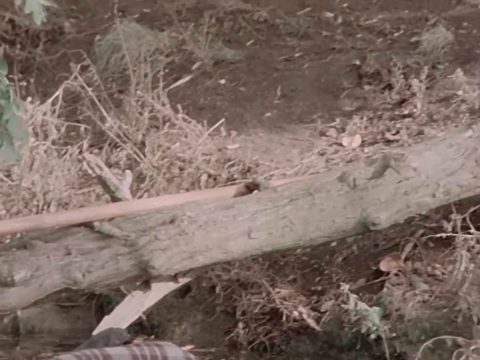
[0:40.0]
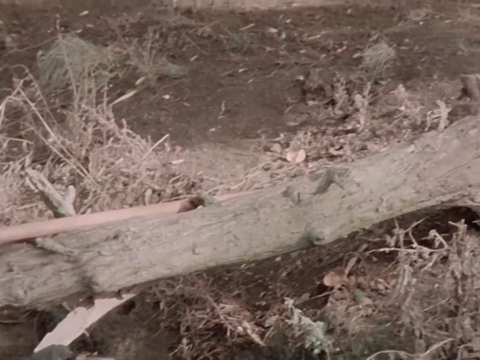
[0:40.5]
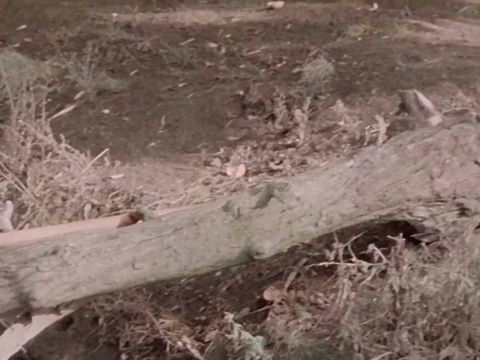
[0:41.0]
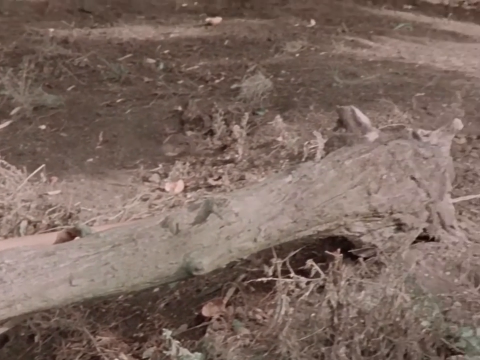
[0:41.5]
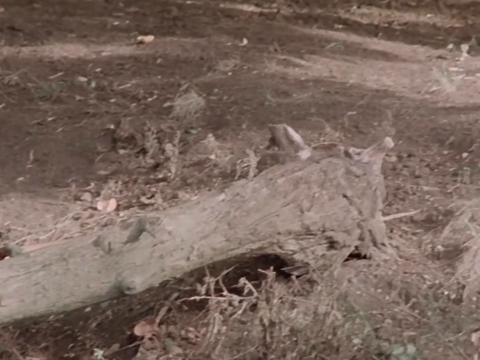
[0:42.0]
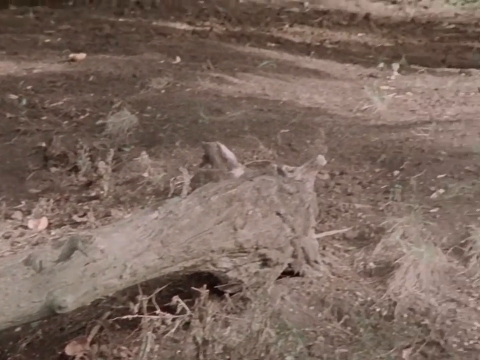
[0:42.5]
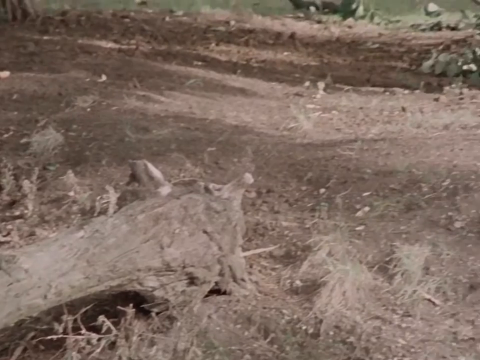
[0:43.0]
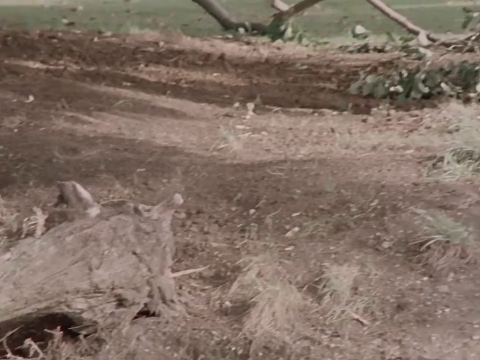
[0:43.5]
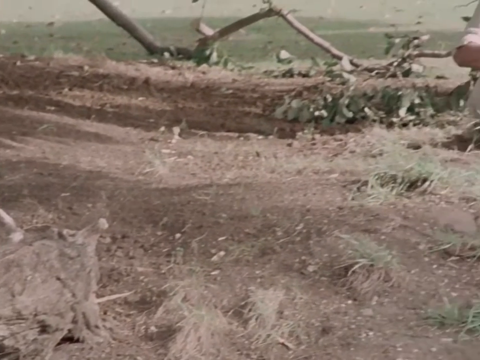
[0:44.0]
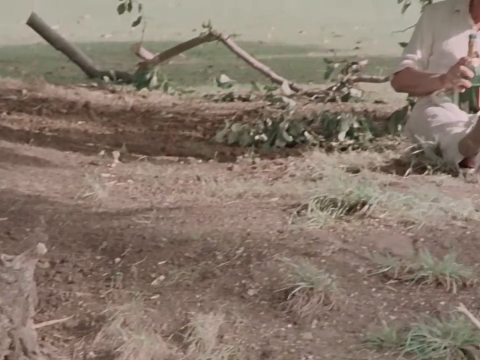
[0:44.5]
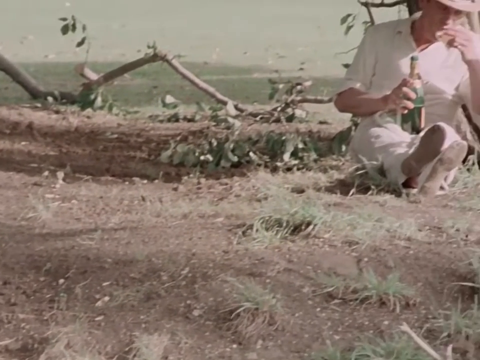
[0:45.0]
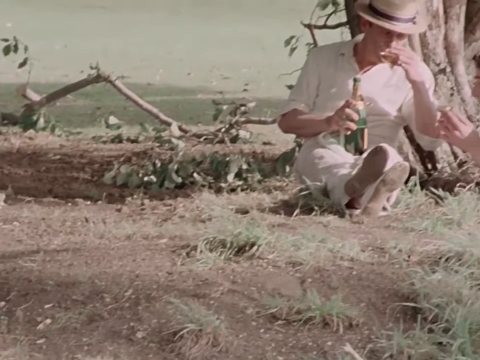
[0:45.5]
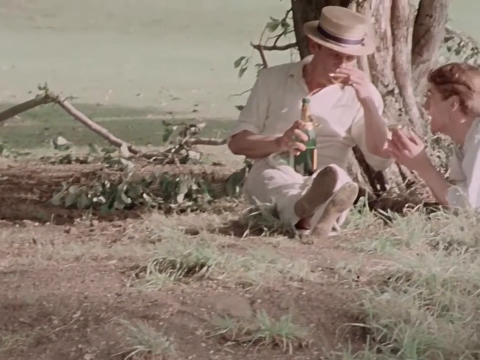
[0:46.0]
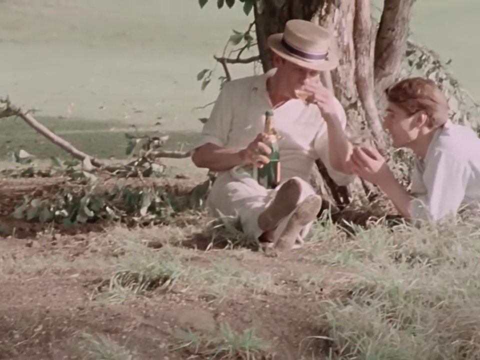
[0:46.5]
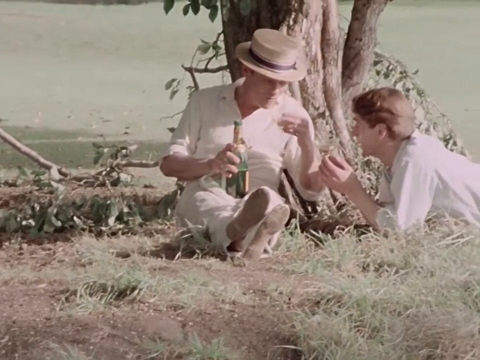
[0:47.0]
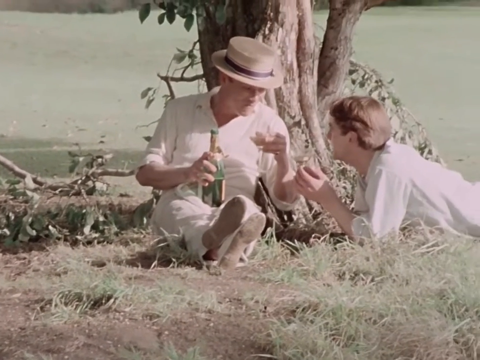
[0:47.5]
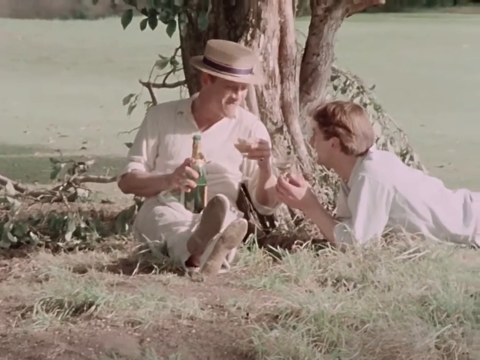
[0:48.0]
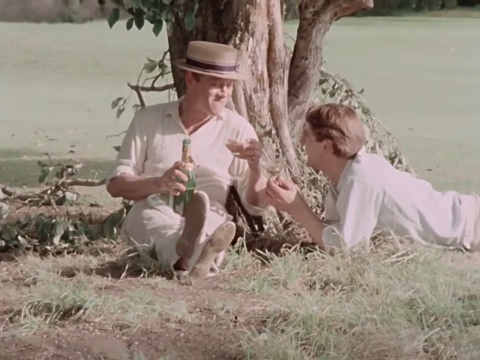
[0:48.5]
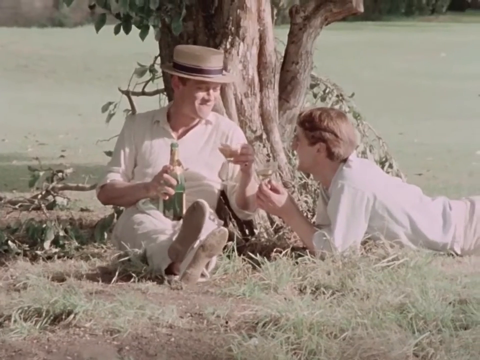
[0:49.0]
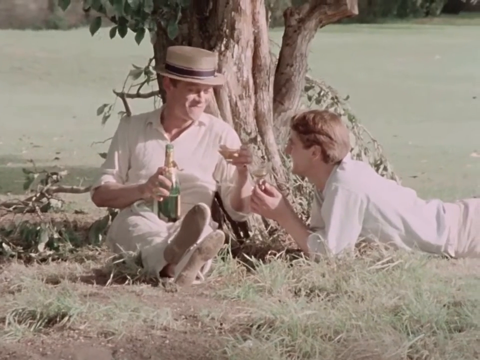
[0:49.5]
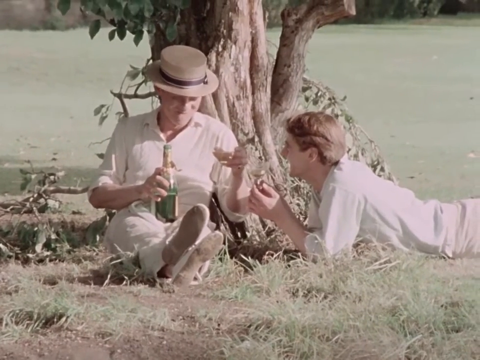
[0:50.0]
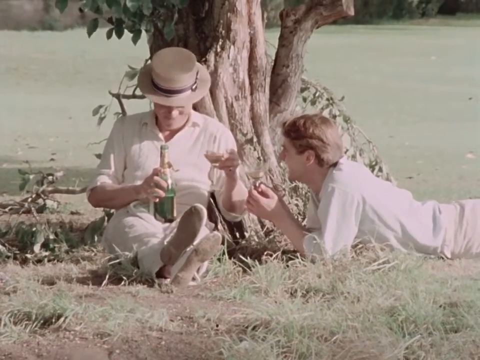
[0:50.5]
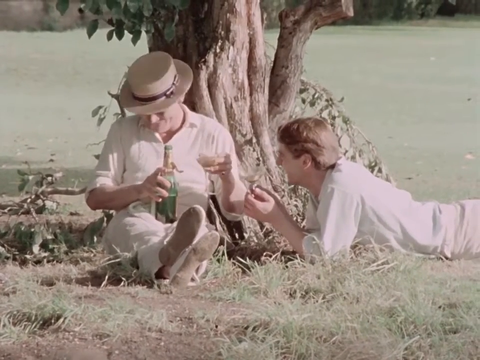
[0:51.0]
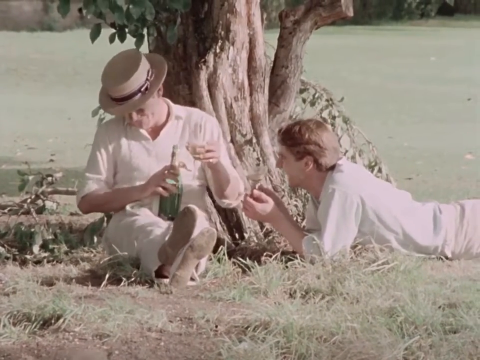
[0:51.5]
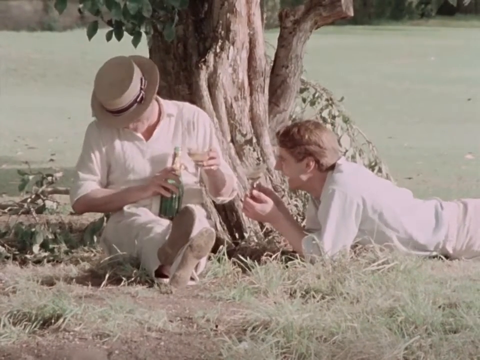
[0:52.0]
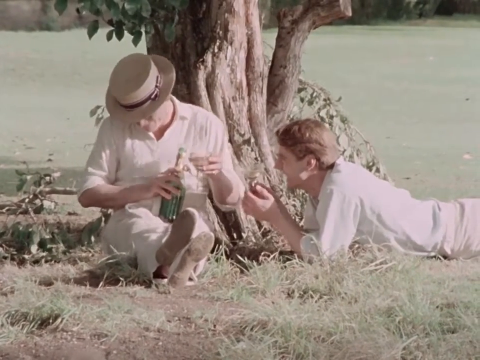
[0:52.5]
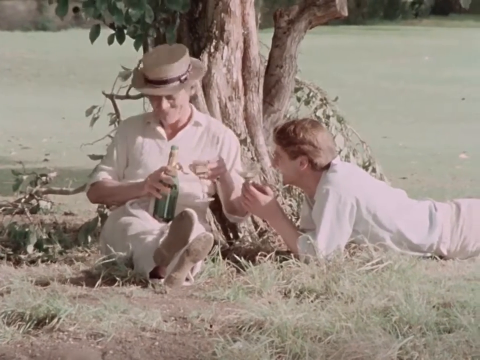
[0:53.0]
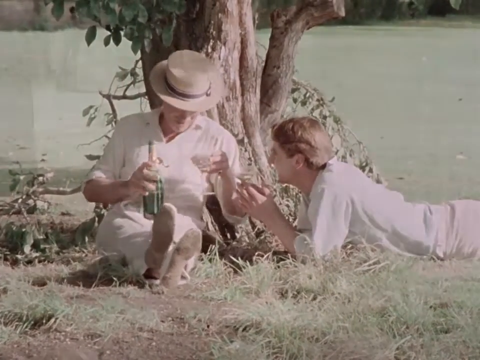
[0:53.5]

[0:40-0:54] The shot begins on what appears to be a downed tree right next to where the boat was pulled ashore, and follows the line of the tree over to the man in the straw hat who had been sleeping in the boat. He sits upright with his back against an upright tree, his legs extended in front of him and crossed. He holds the bottle of wine or champagne and sips from very shallow champagne glasses. He smiles and laughs with the young man who was pulling the Puro, who lies on his stomach in the grass facing the man in the straw hat, also holding his own glass of bubbly. The waterway is visible in the background behind them. They appear to be enjoying their conversation over fine food and drink.